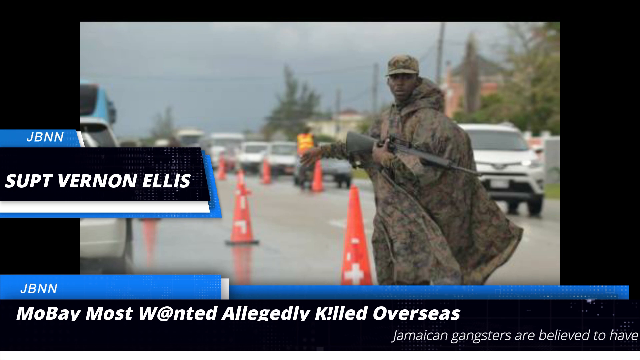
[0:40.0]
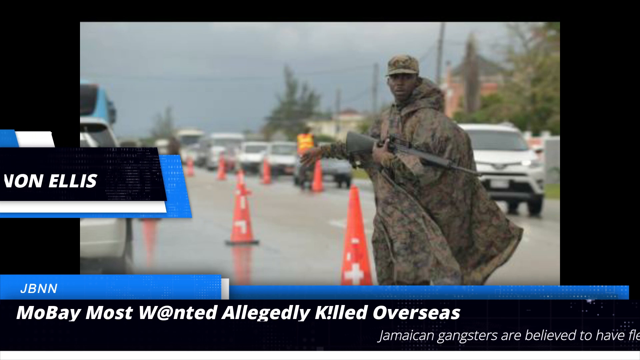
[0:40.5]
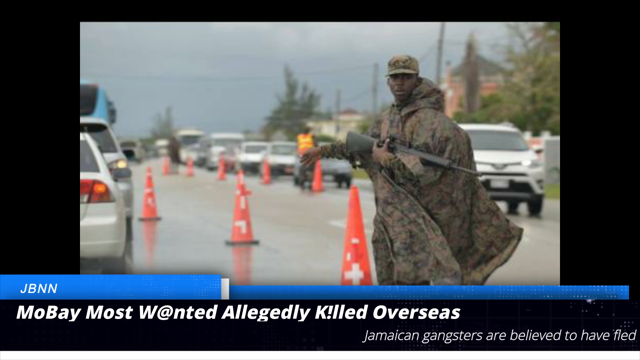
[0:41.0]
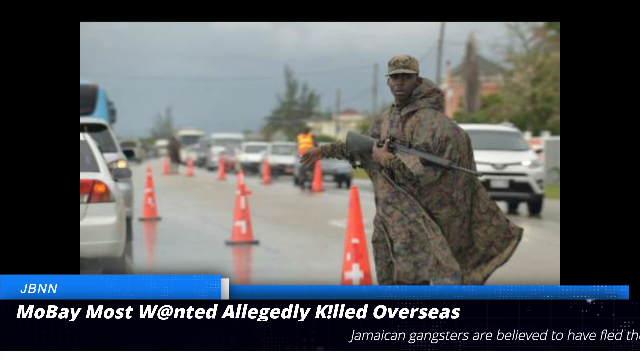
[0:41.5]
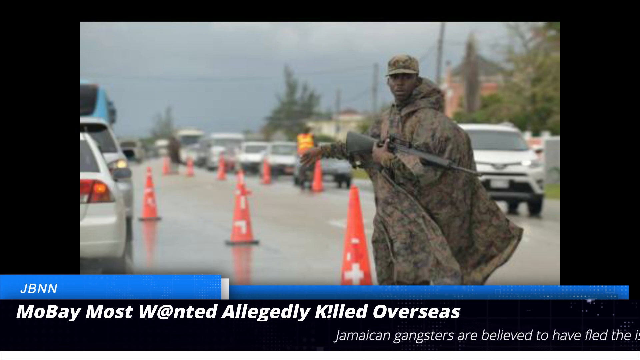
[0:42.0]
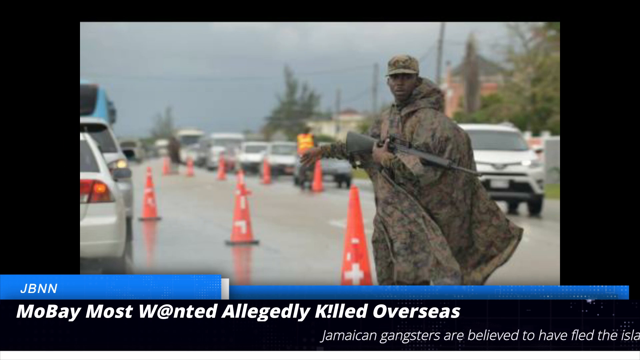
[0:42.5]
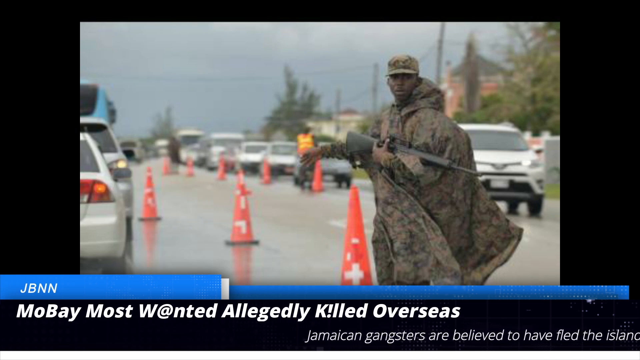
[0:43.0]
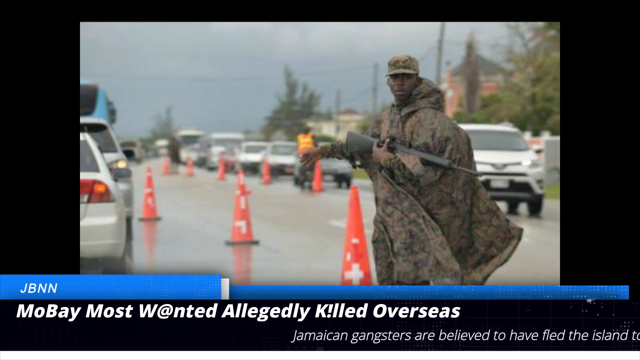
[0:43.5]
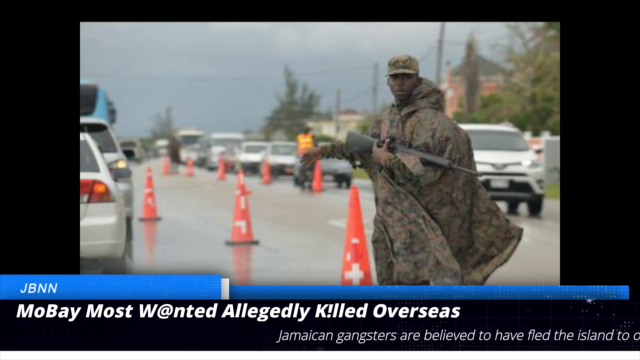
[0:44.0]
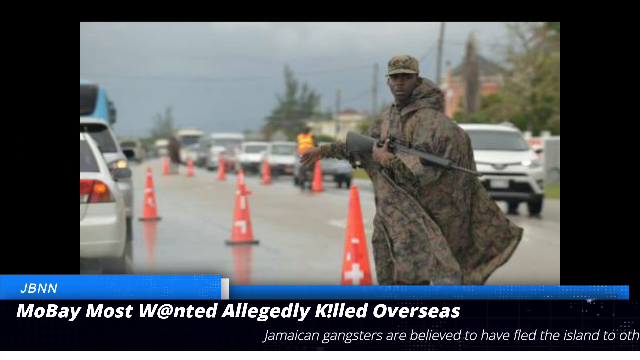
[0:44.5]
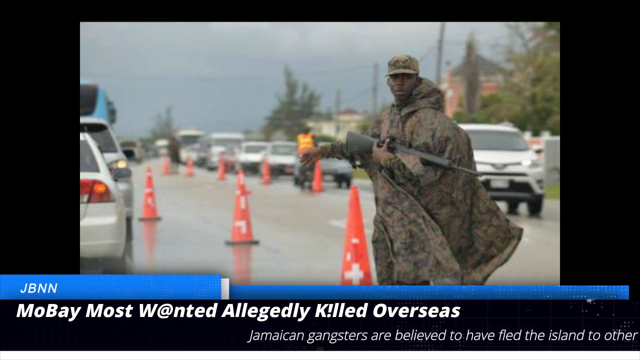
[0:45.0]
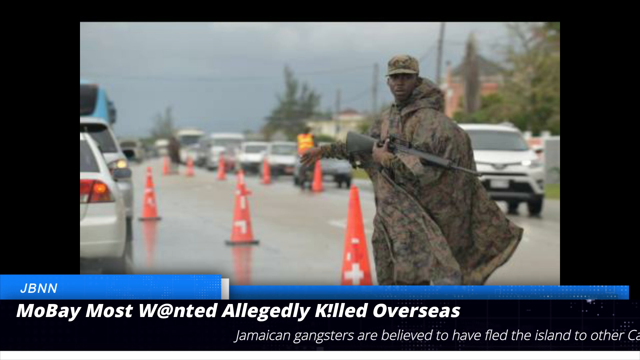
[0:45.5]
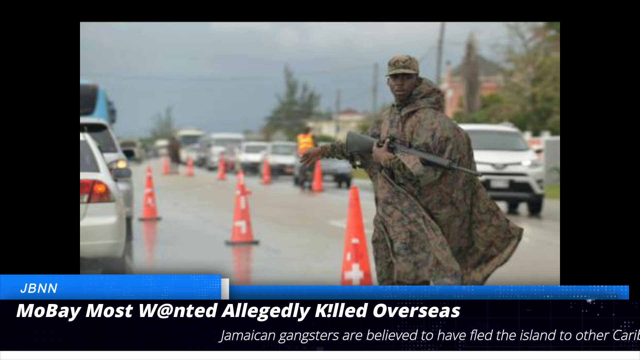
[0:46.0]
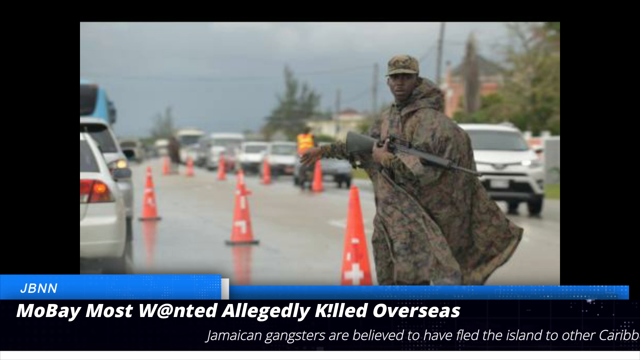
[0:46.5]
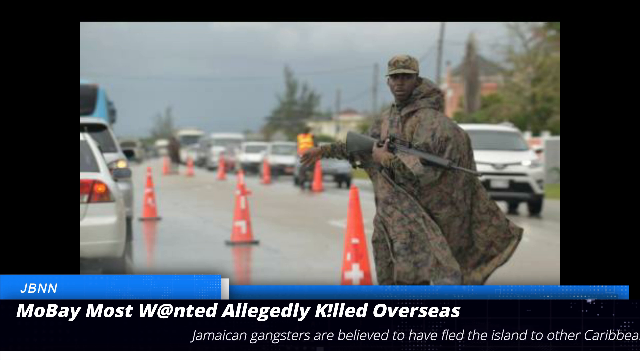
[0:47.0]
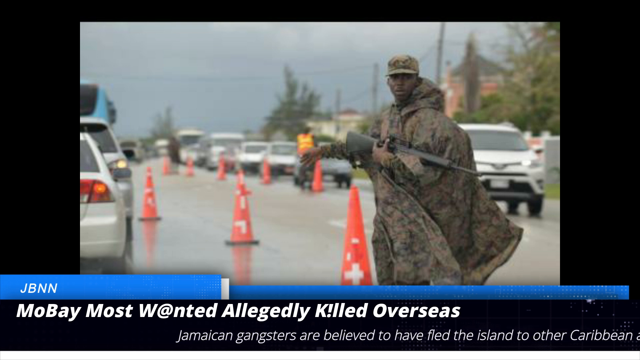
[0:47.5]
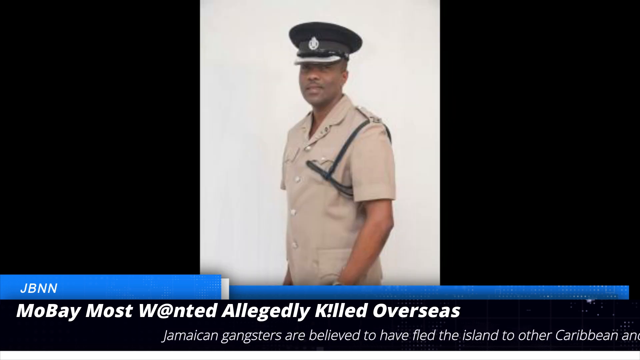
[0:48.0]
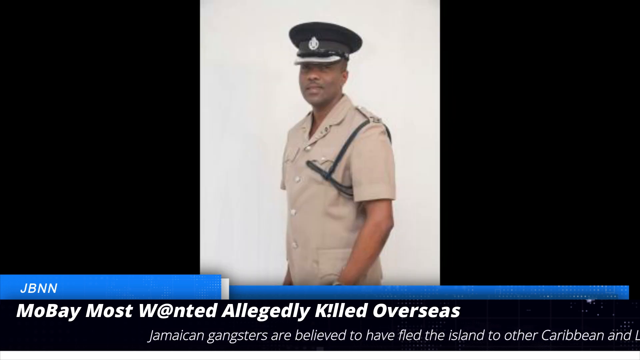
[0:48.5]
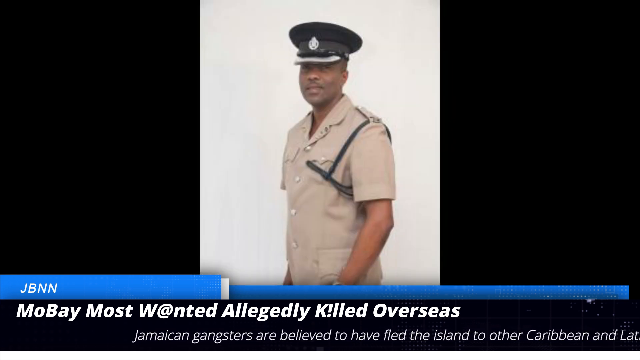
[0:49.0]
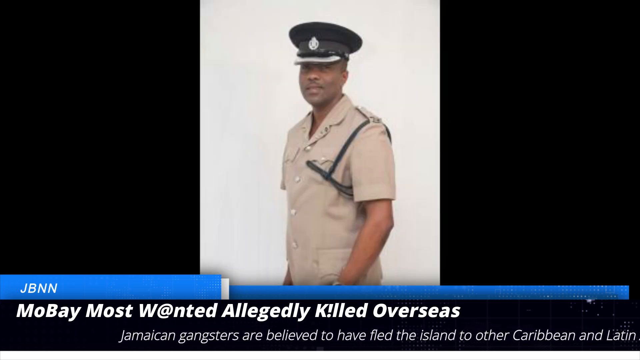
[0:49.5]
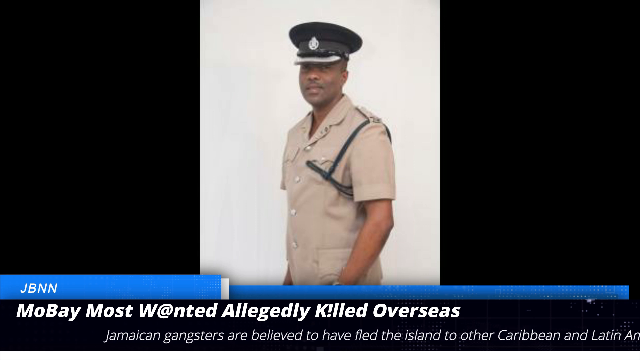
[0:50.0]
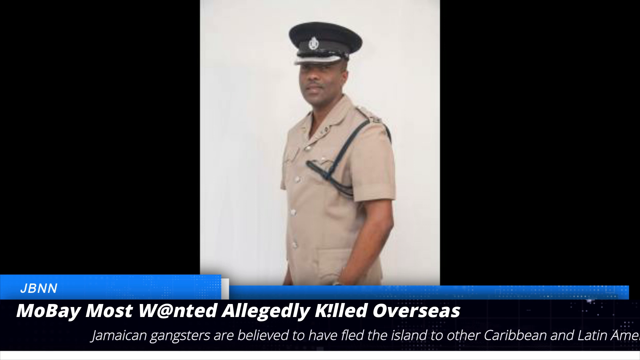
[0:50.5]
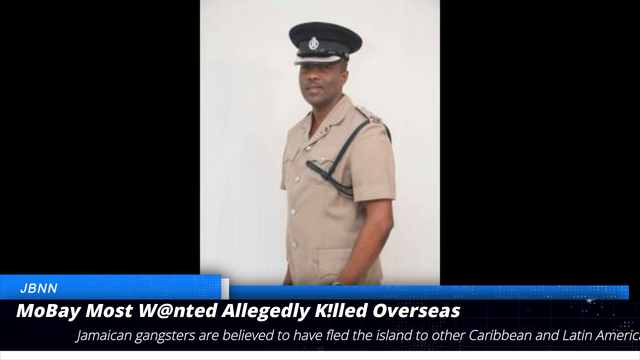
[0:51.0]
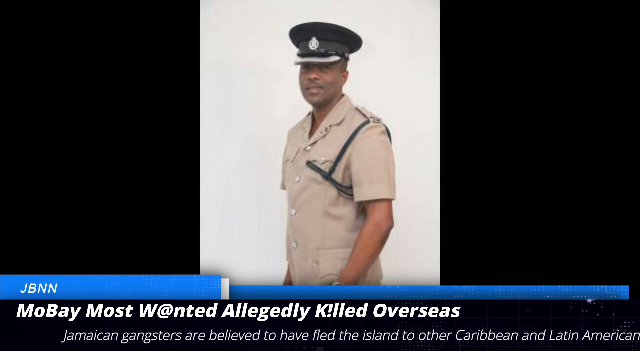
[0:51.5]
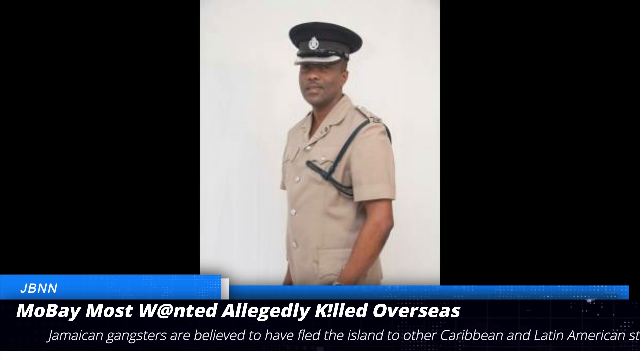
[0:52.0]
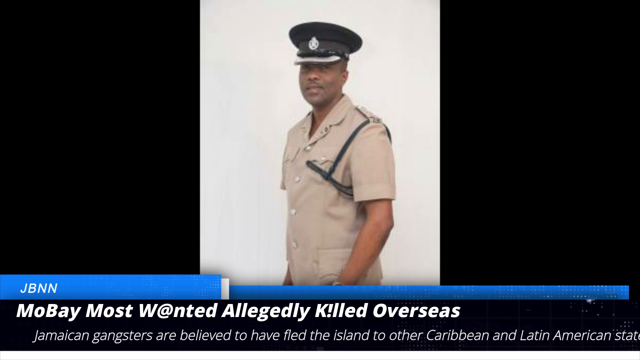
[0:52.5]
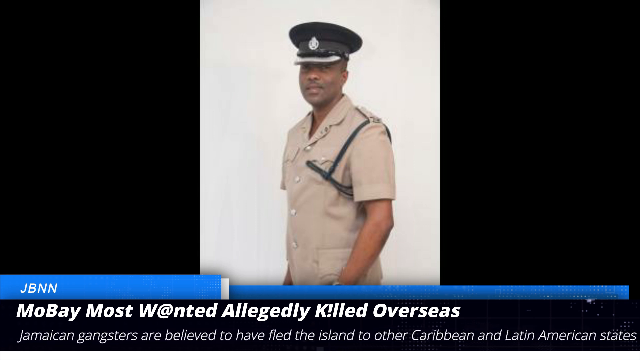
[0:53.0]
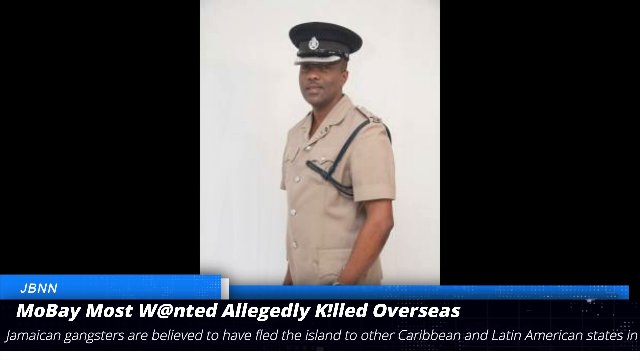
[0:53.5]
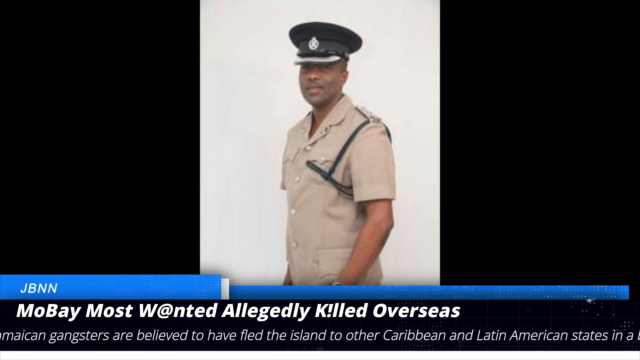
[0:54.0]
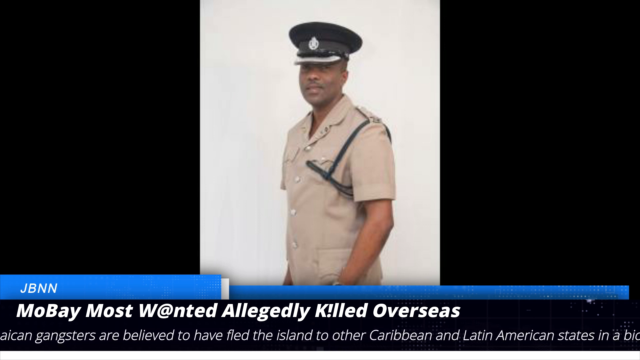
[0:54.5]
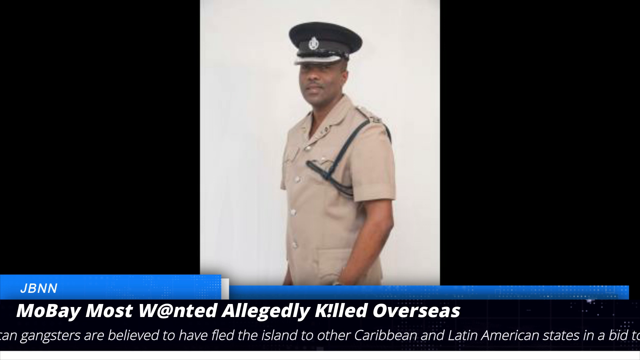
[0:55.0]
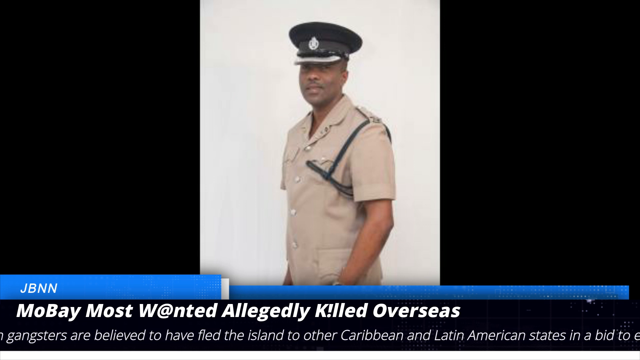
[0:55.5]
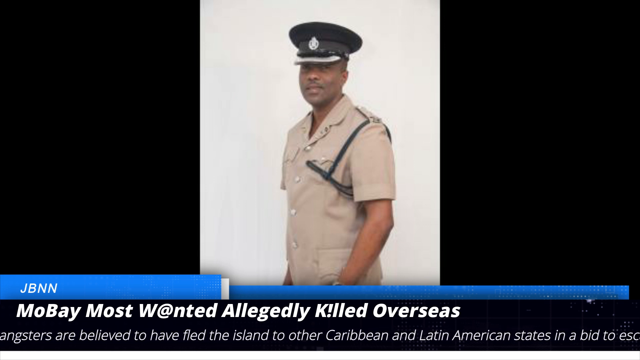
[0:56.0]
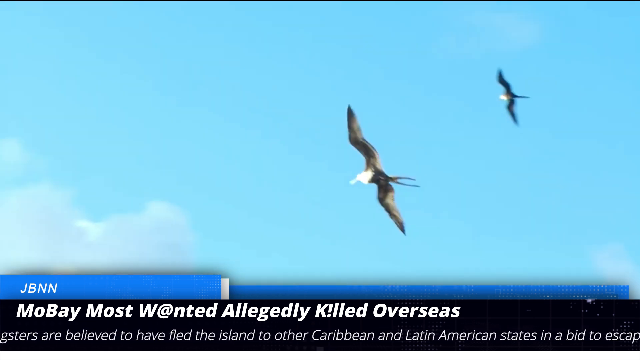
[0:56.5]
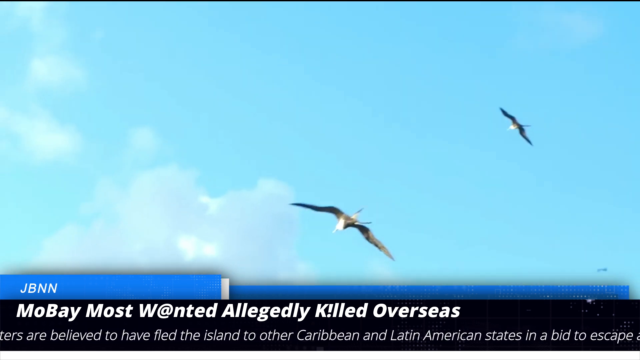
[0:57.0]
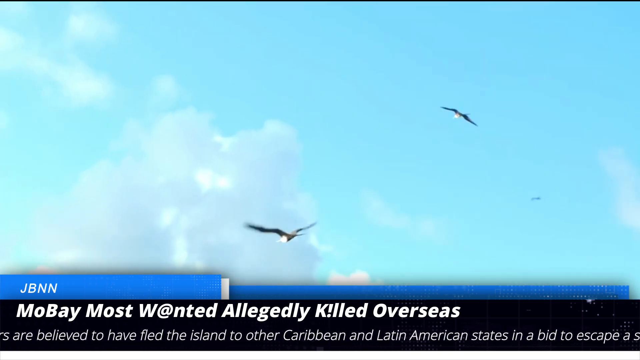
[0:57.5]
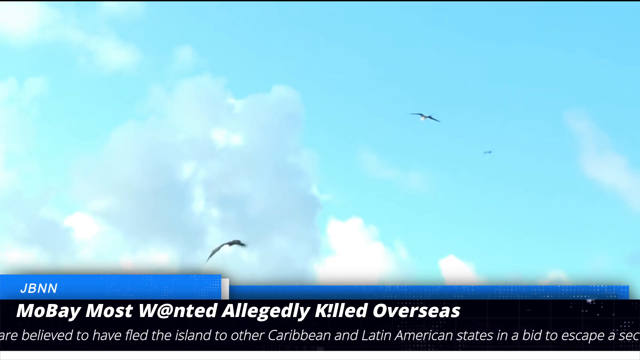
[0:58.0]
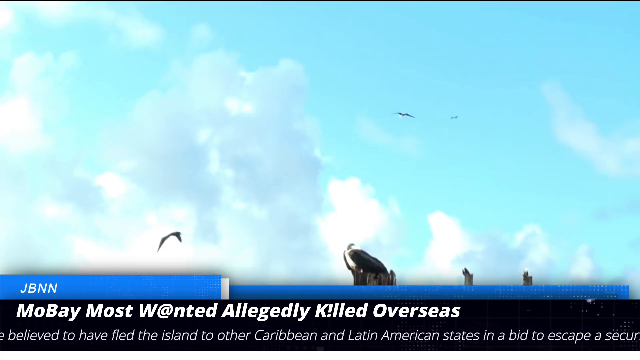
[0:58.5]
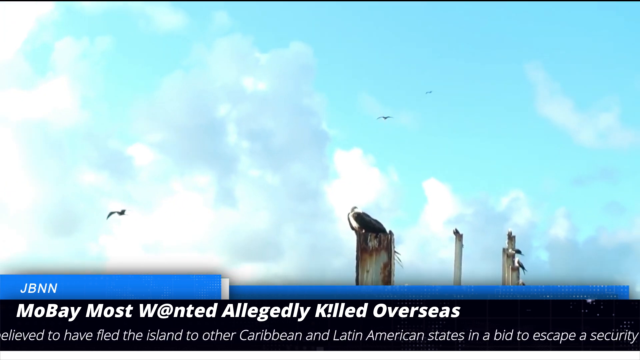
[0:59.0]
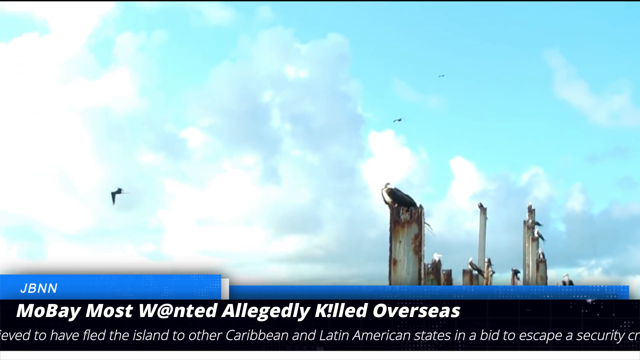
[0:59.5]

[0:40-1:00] A street scene appears; the street is very reflective, so it looks like it might have been raining. Many street cones run up and down the street, lining it on the right and left and separating lanes of traffic. On the right-hand side, in the center, a black man stands with a black rifle, wearing a camo poncho and a camo baseball cap, looking right toward the camera. The video then turns to a static image occupying the center third of the screen: a black man in a military uniform, his body facing somewhere around seven while his head is turned a little to the left so he looks right at the camera. He wears a black hat and a tan uniform with gold buttons going up it. At the bottom, white text on a black background reads "wanted allegedly killed overseas".